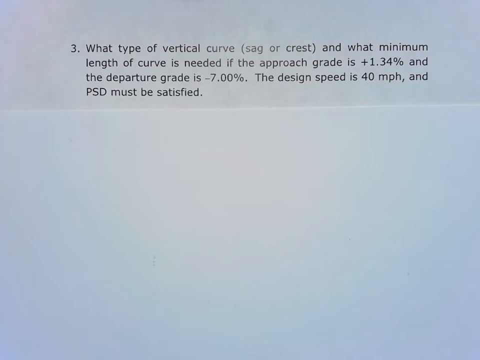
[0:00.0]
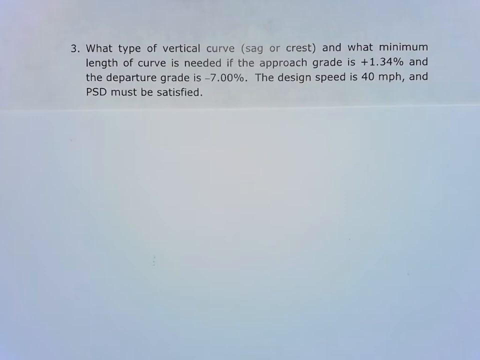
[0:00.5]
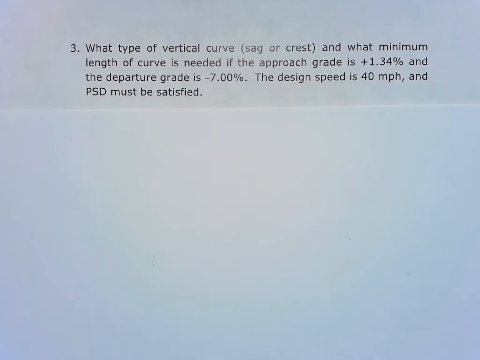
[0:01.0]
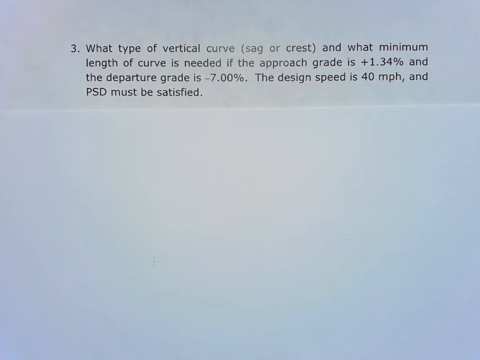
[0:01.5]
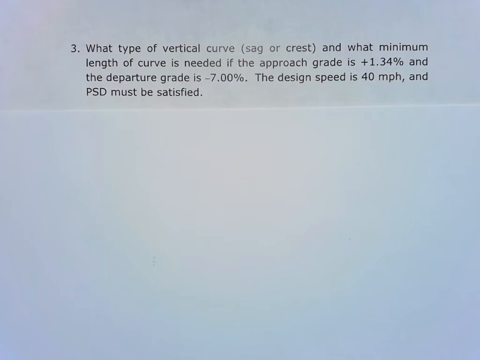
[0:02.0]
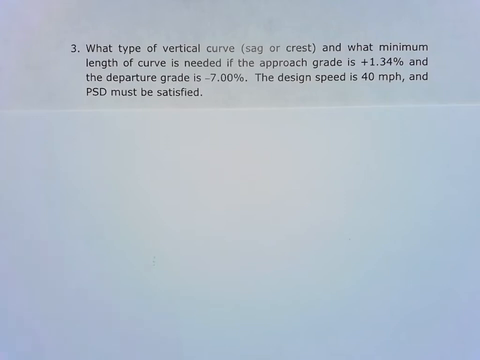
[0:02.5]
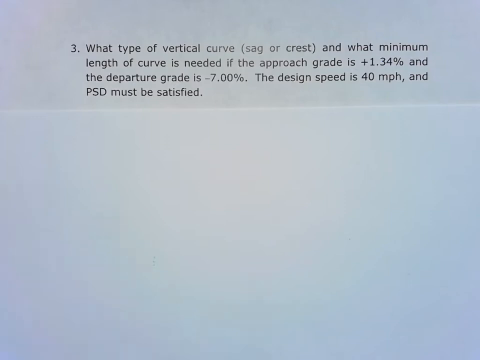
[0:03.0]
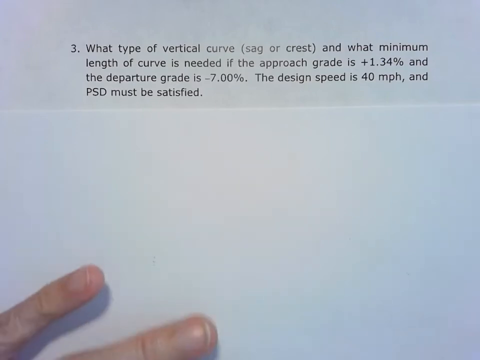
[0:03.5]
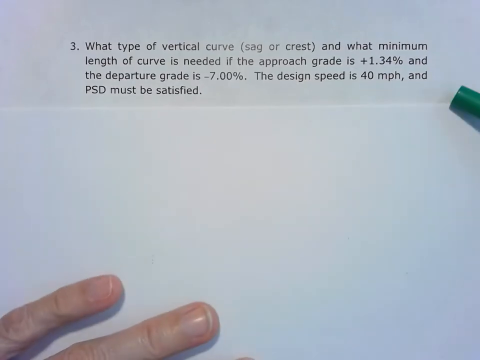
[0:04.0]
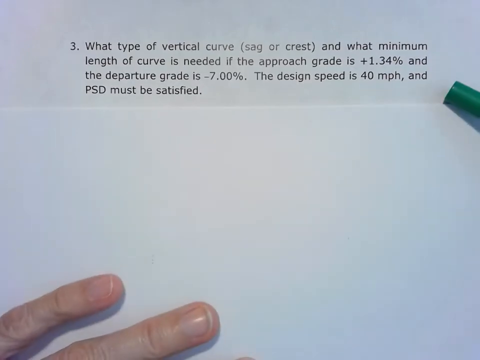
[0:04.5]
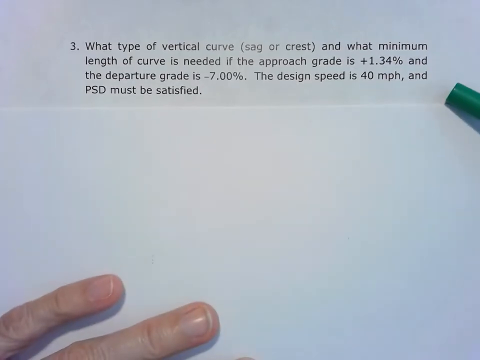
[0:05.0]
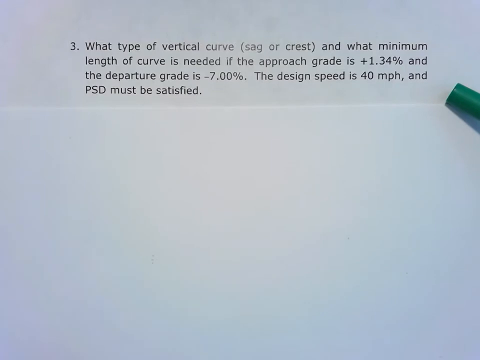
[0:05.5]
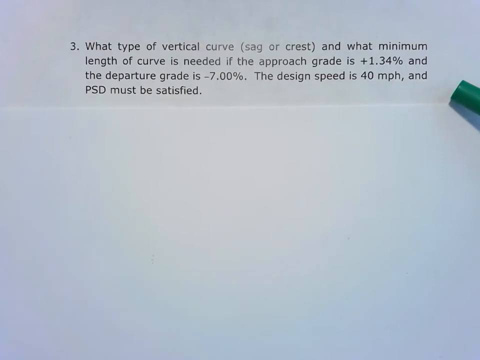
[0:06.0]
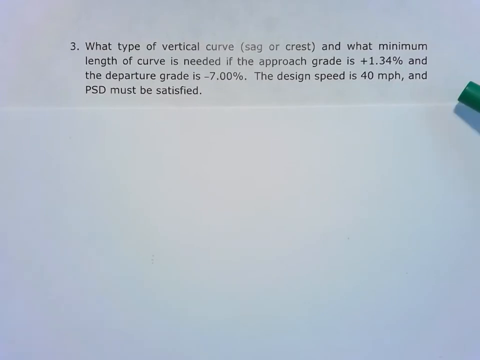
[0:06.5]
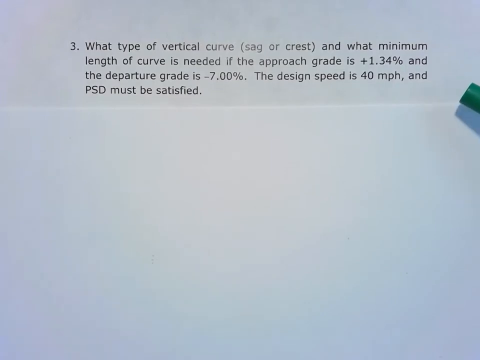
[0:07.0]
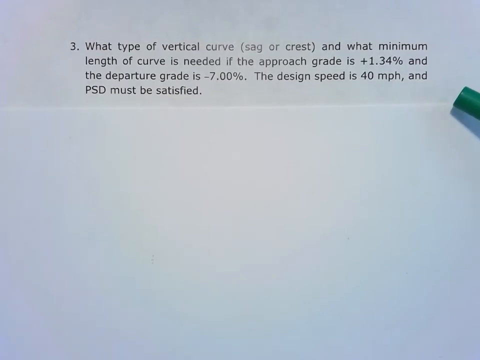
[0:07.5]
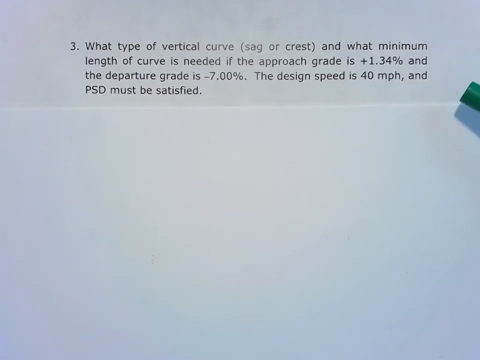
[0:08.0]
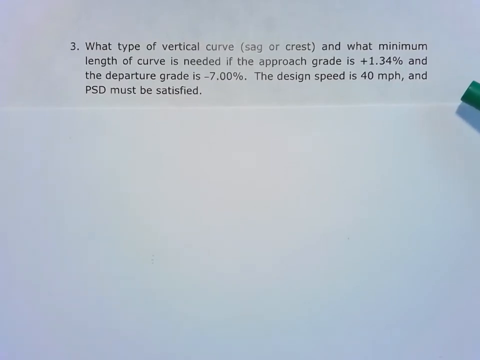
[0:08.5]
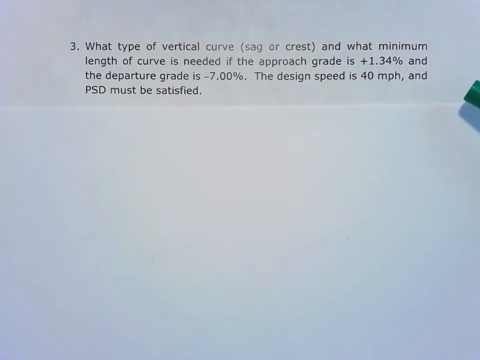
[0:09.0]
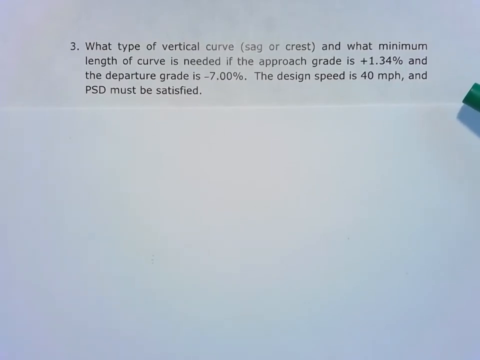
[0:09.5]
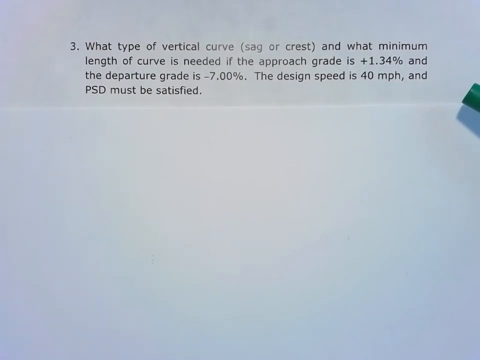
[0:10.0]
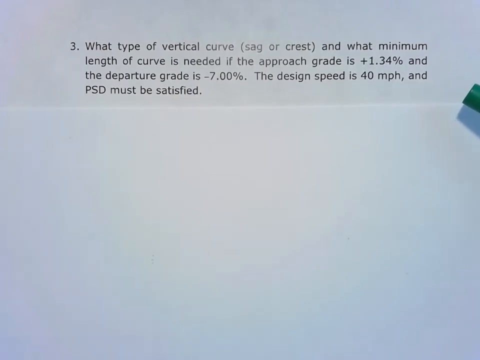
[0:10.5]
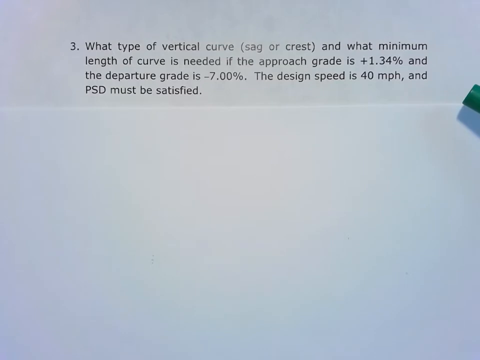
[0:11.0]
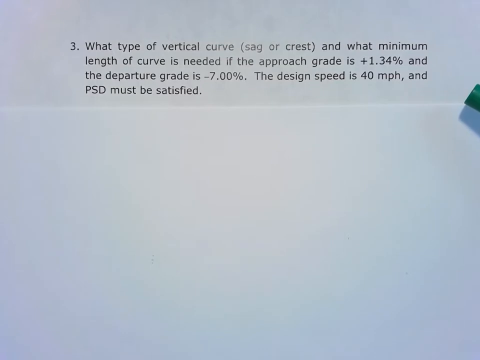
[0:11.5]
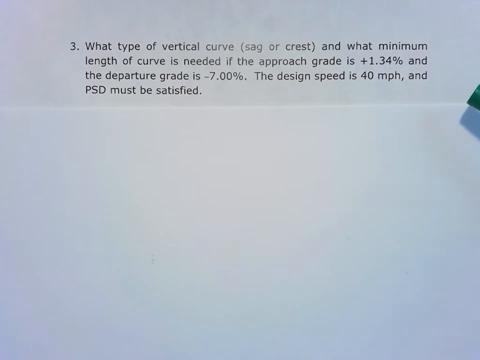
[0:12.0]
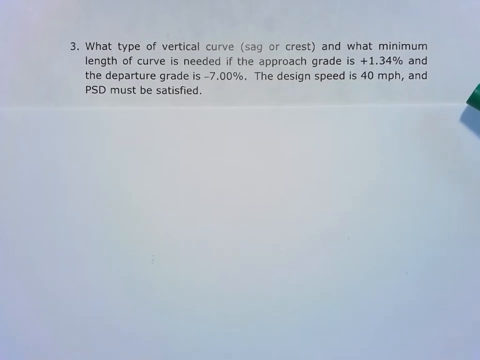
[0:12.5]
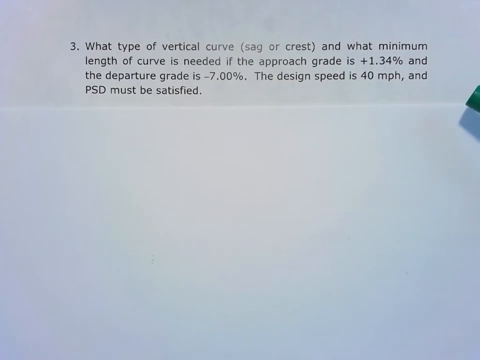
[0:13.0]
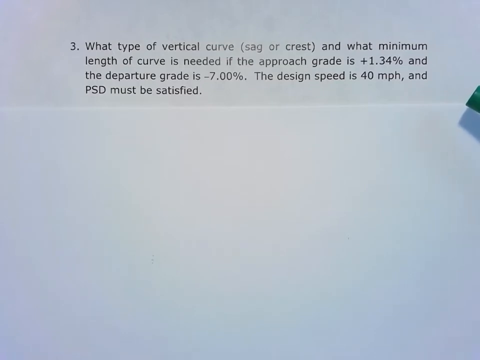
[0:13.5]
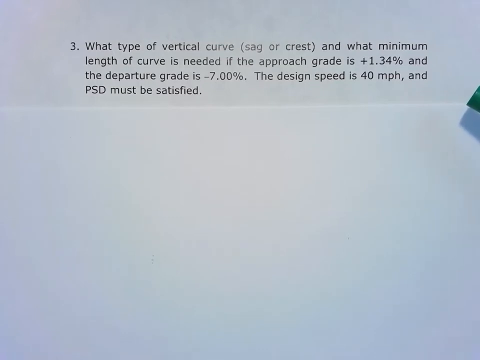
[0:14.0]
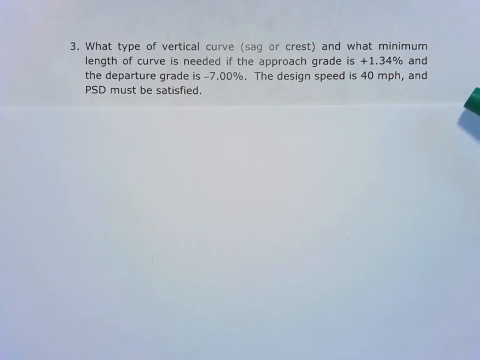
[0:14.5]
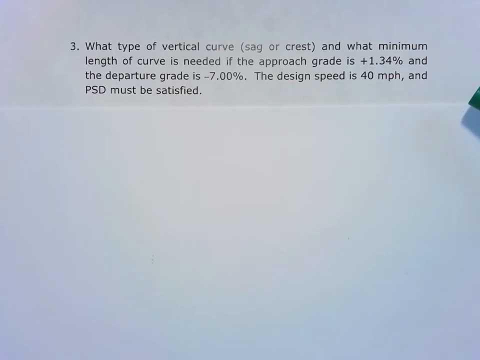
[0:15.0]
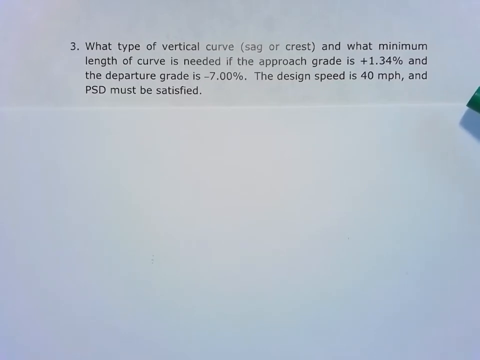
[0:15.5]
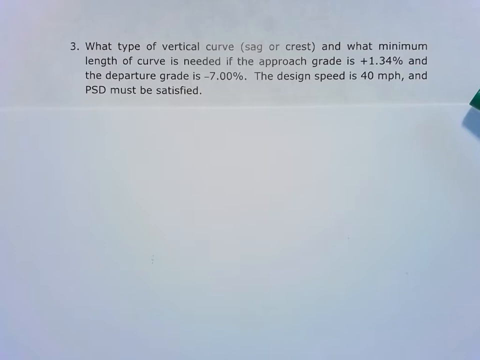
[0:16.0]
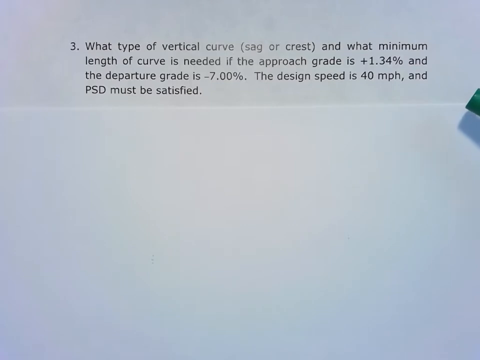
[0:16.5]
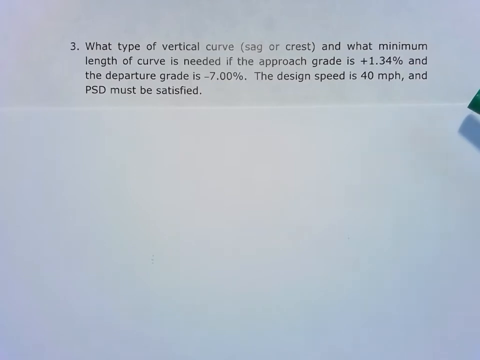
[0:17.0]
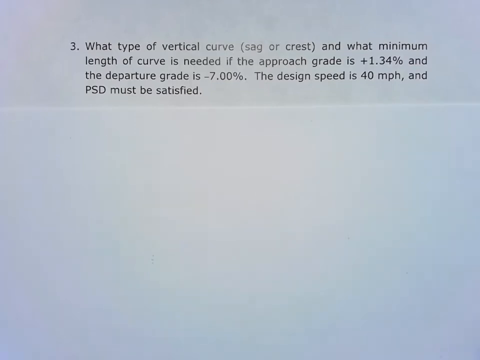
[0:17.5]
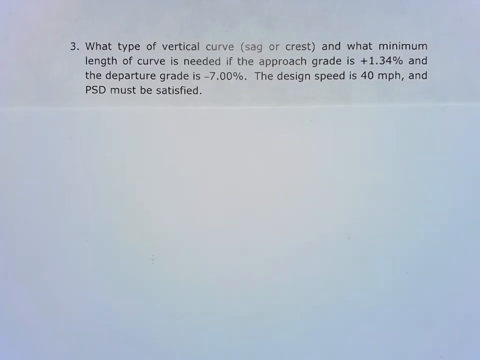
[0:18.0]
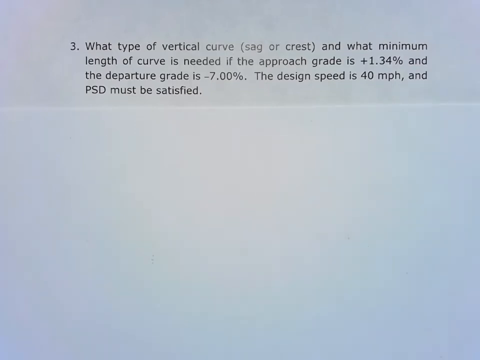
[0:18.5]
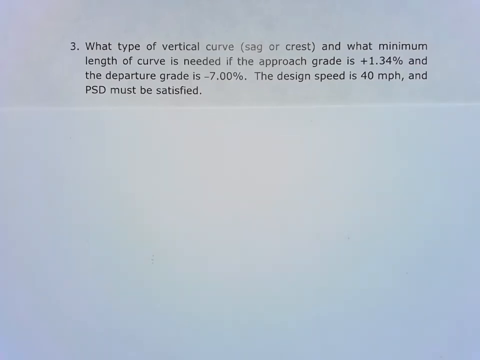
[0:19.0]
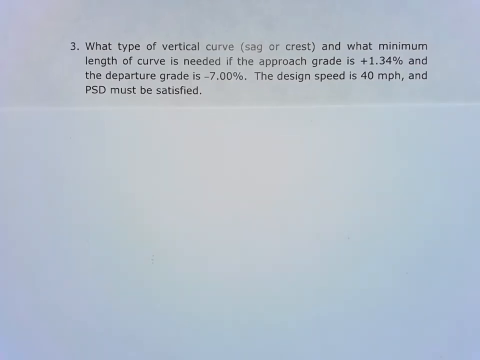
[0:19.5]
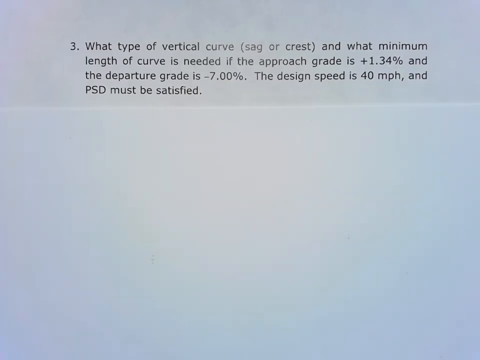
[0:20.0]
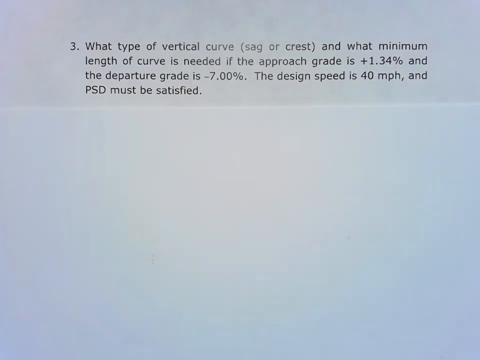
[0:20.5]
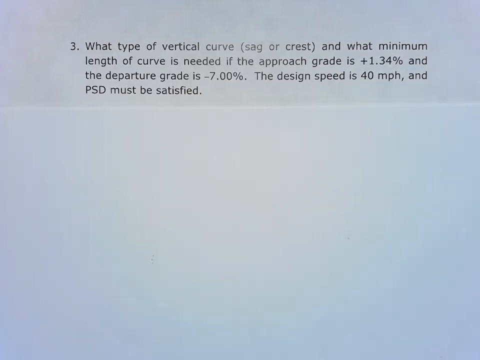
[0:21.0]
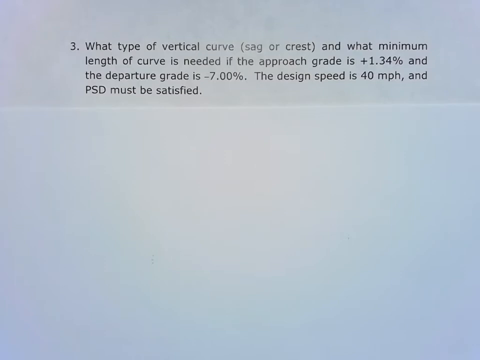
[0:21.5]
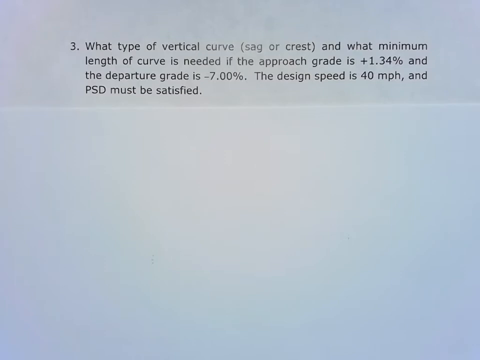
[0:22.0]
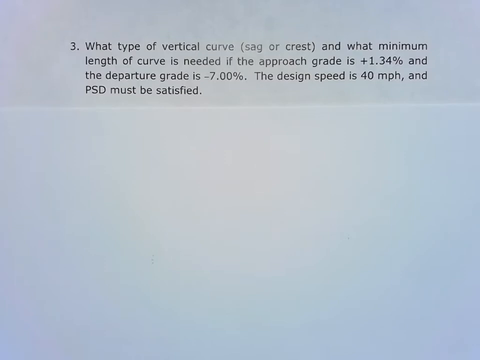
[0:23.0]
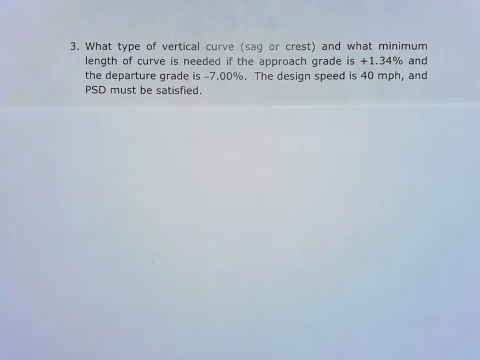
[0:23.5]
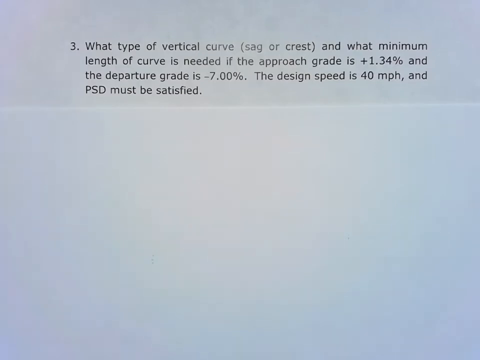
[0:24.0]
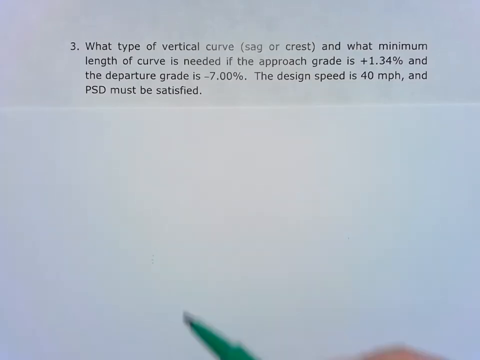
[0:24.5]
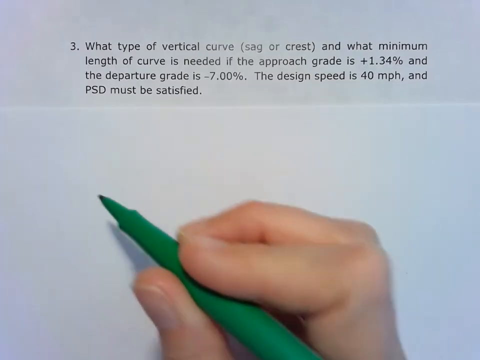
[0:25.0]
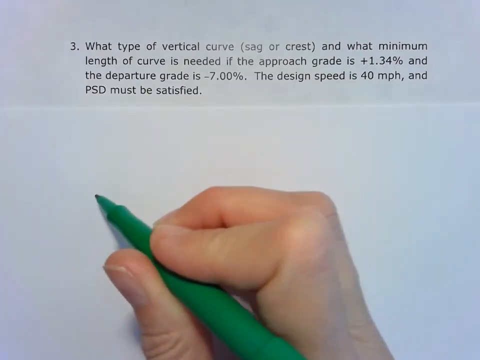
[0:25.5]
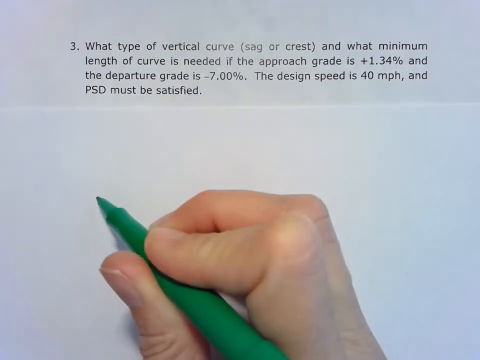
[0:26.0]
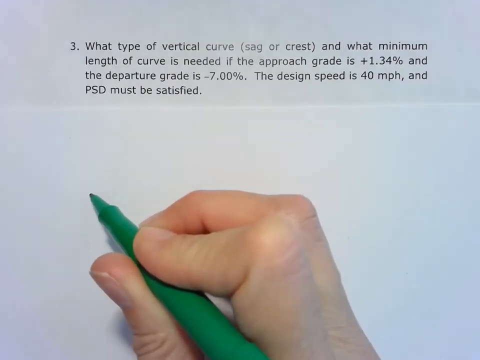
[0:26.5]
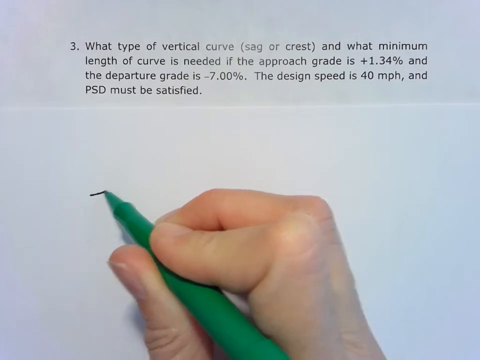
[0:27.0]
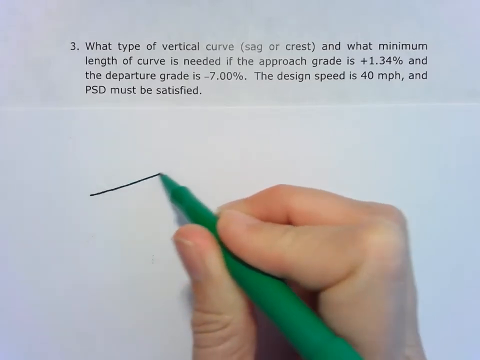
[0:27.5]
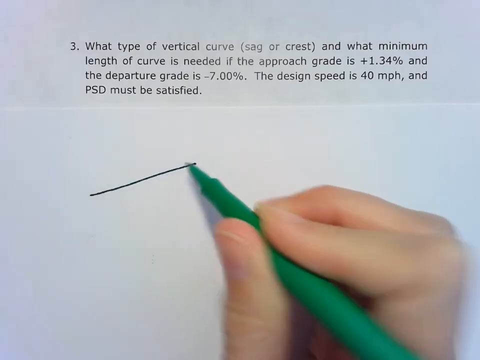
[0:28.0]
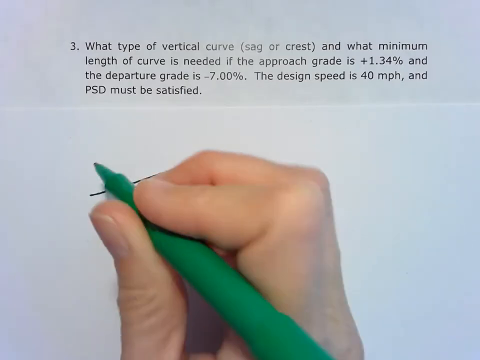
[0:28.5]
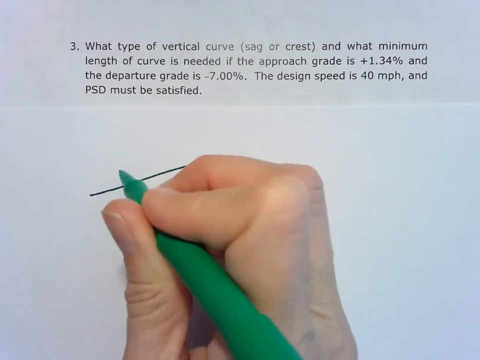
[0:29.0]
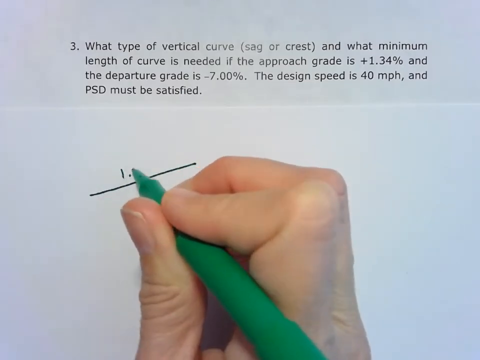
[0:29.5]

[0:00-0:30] A question is written on a white piece of paper, four lines of text long. It starts with the number three and says "what type of vertical curve (sag or crest) and what minimum length of curve is needed if the approach grade is +1.34% and the departure grade is -7.00%. The design speed is 40 mph and PSD must be satisfied." The video focuses on the question, perhaps to provide an answer; it is a tutorial on how to answer it. A person's hand appears in the bottom left corner along with the tip of a green pen, which points at the question and casts a shadow on the paper. The paper has a fold underneath the question, and below the question there is a lot of white space. A right hand holding the green pen begins to draw a line at an angle and writes 1.34 above the line.